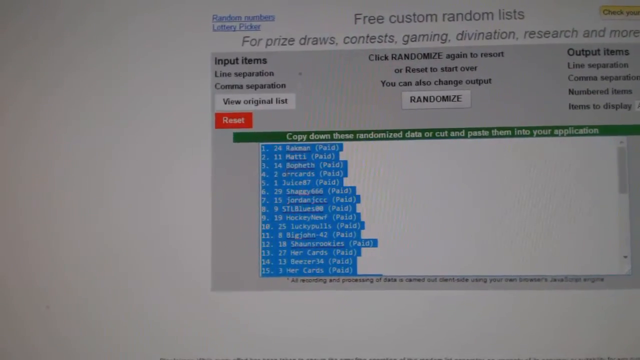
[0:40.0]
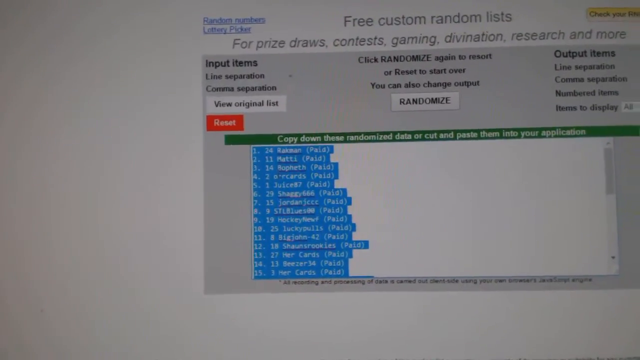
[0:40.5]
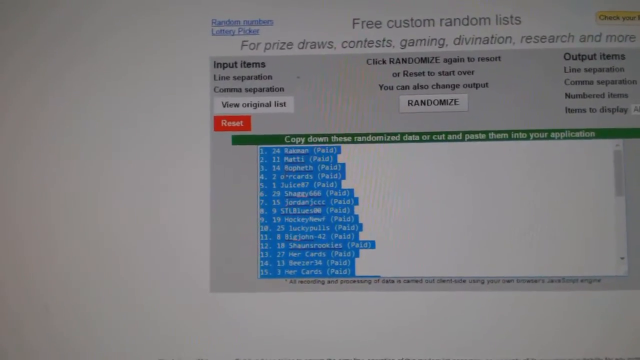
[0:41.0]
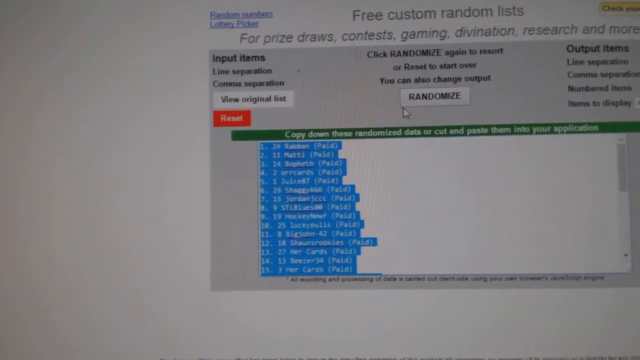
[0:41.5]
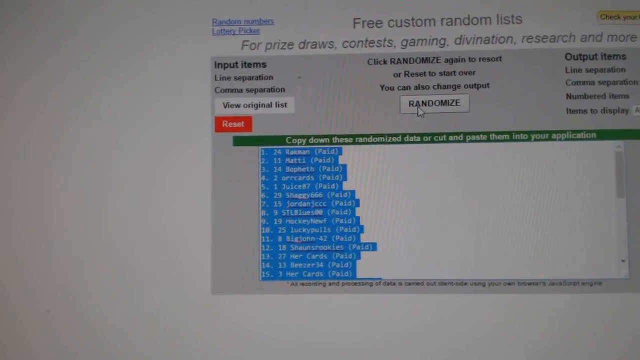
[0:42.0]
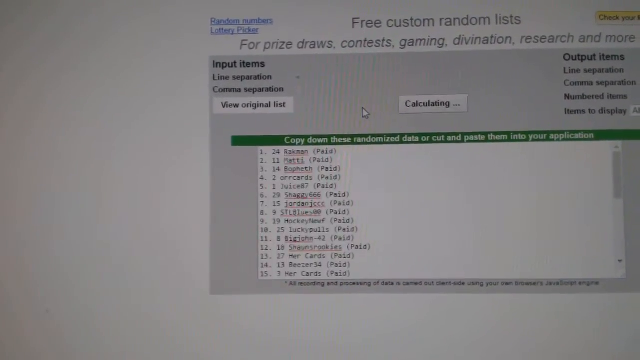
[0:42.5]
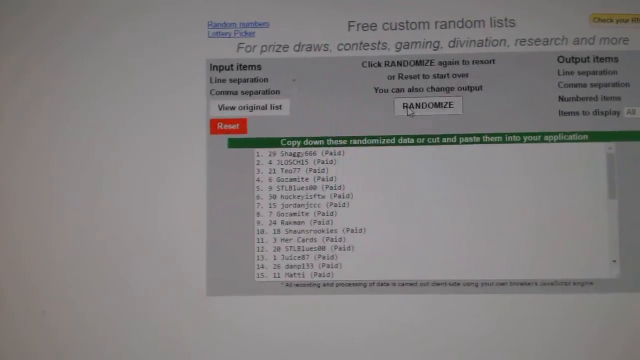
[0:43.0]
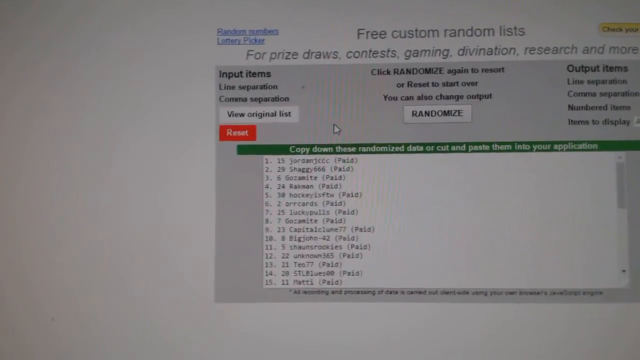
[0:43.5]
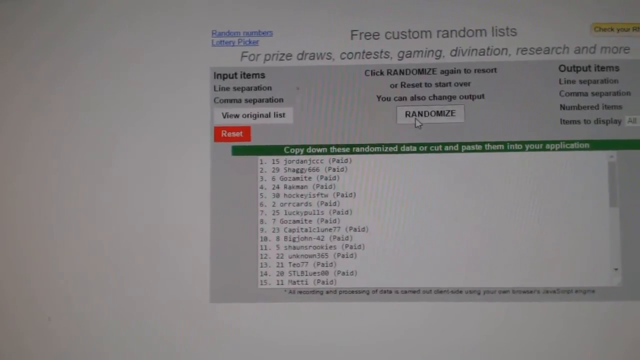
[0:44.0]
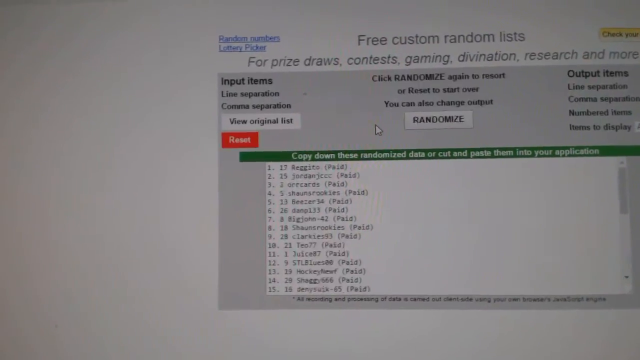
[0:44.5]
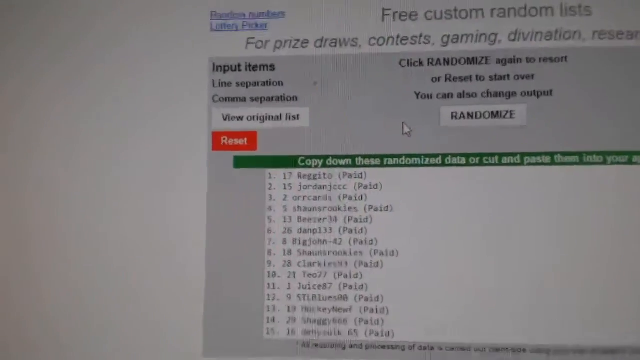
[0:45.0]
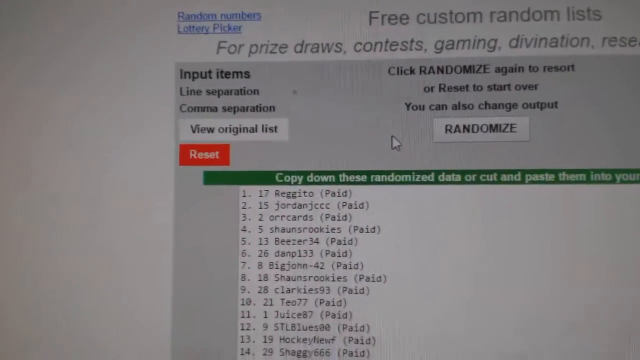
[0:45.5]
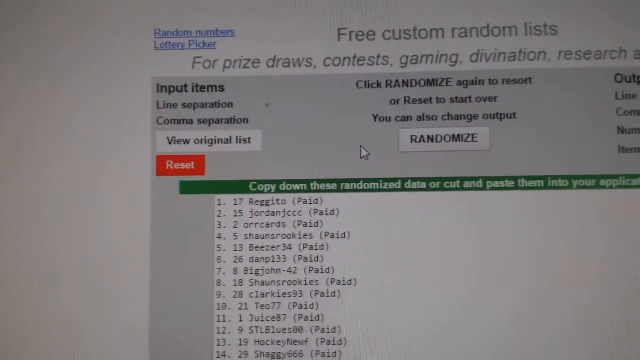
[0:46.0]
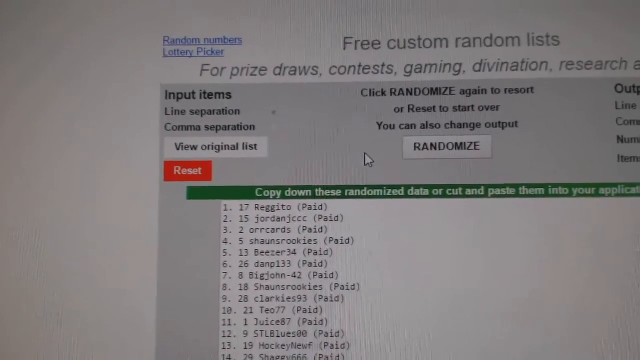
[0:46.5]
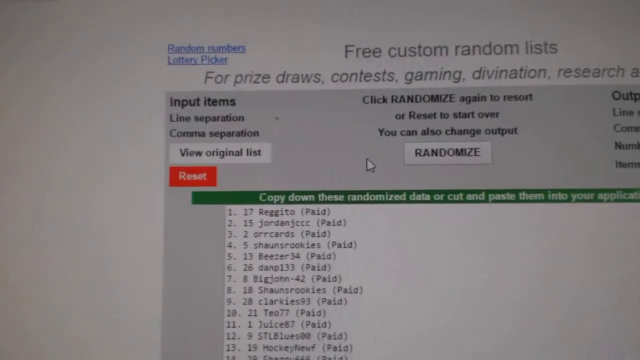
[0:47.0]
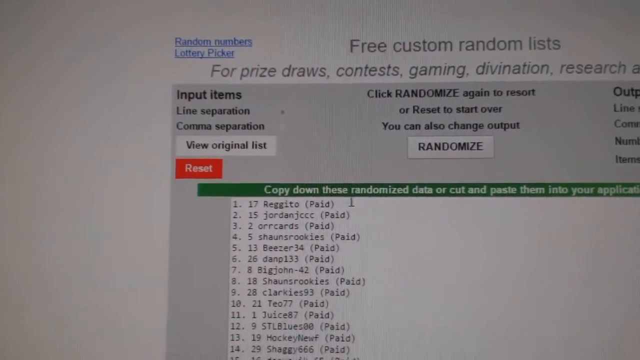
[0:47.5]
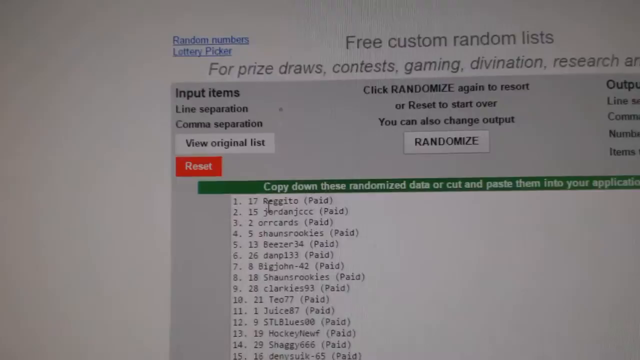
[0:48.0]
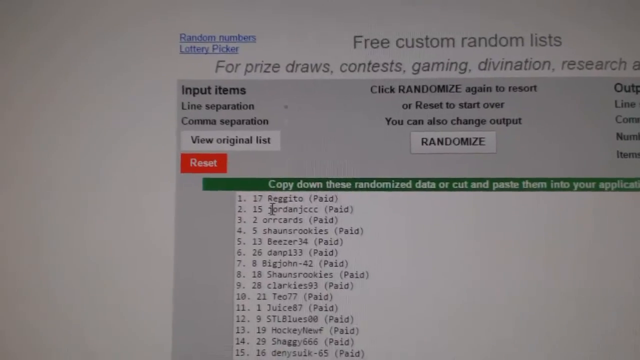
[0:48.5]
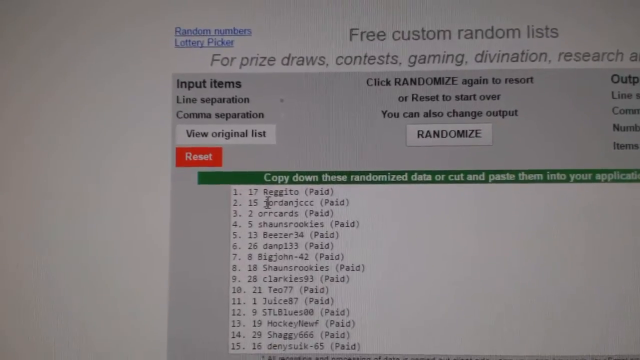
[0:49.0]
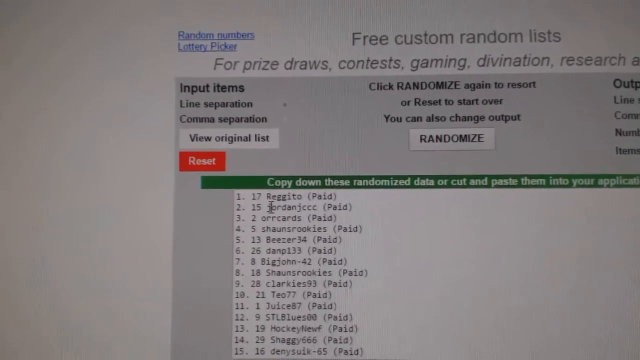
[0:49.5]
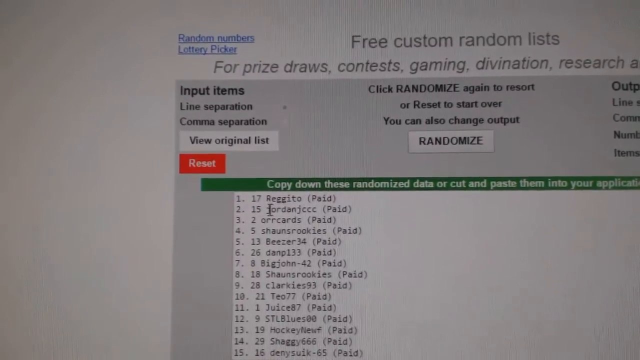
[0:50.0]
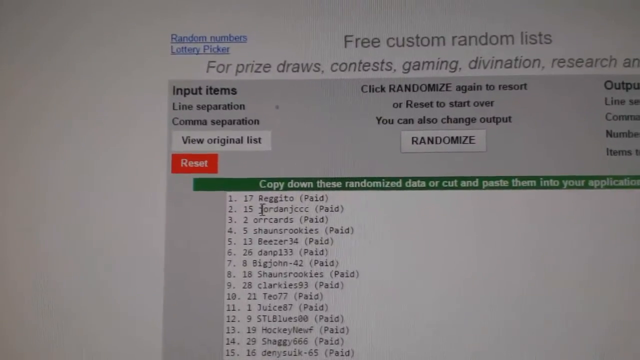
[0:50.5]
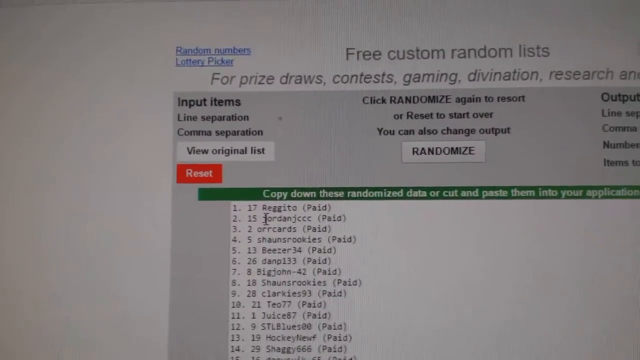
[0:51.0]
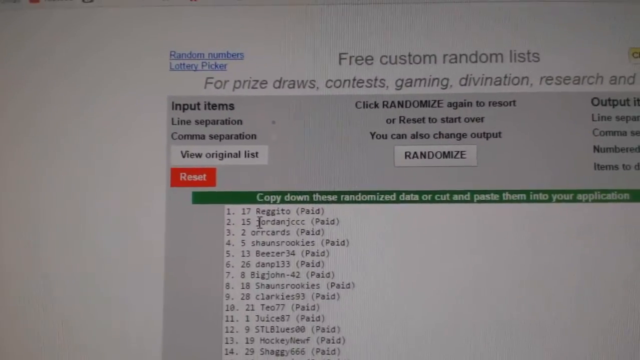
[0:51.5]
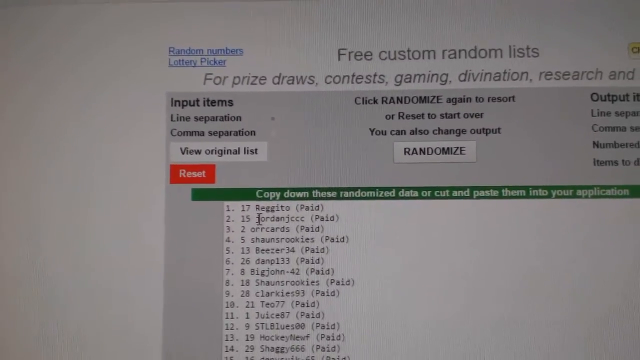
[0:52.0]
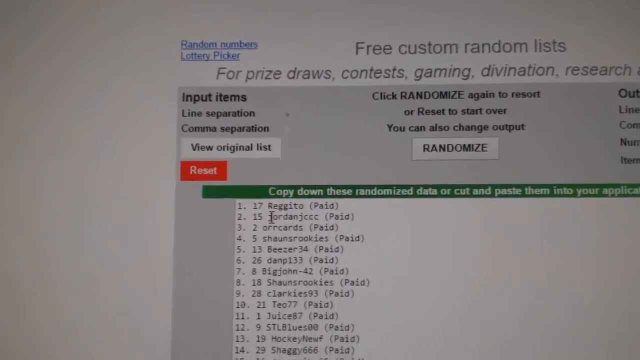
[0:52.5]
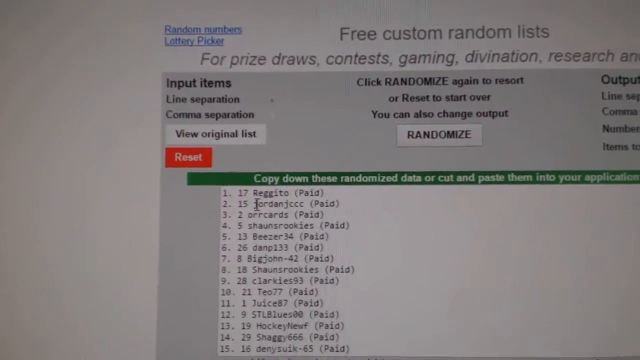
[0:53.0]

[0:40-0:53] The camera stays on the same area of the computer screen, shaking a little as it records. The text is still highlighted in a roughly blue color. The person clicks the randomize button, apparently about three times. Afterward the text in the white area is plain black, with the mouse pointer hovering over that area. To the left of the white area, numbers run 1, 2, 3, 4 and so forth, and toward the right there is additional text, apparently including the word "paid" in parentheses to the right of each one. In the upper left-hand corner of the gray rectangular box, text reads "Input Items," and at the far right it says "Output Items." A button on the left reads "View Original List," and beneath it is a red button that reads "Reset."